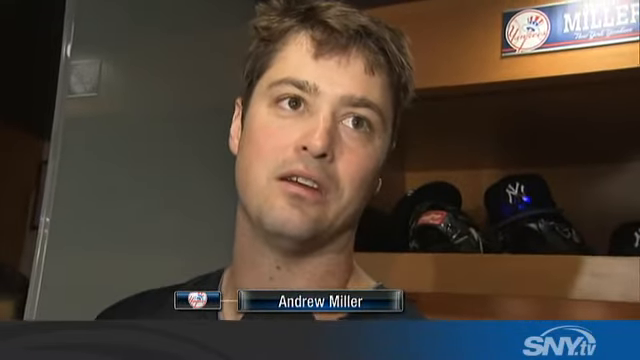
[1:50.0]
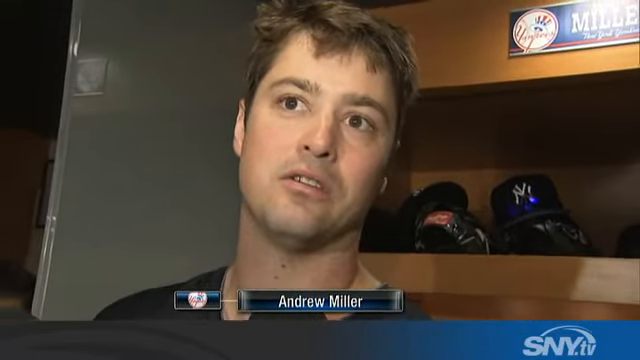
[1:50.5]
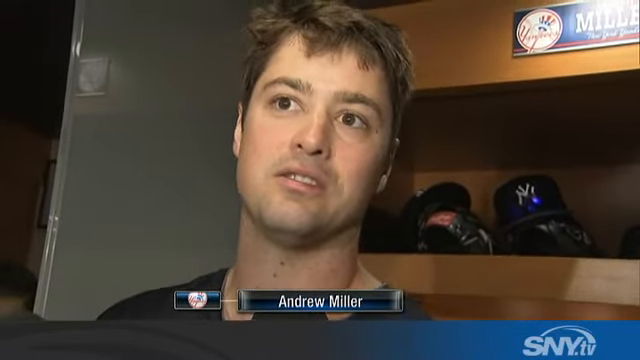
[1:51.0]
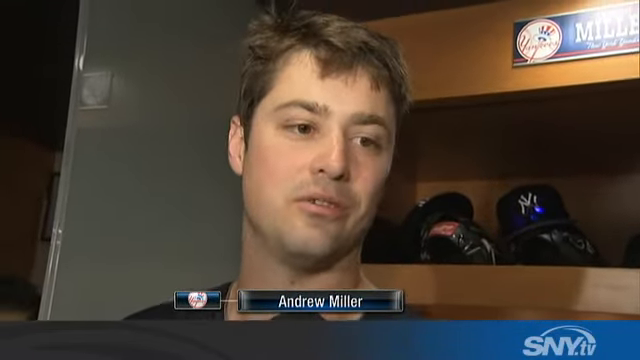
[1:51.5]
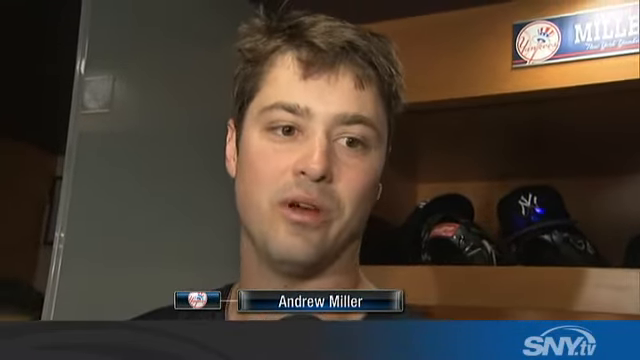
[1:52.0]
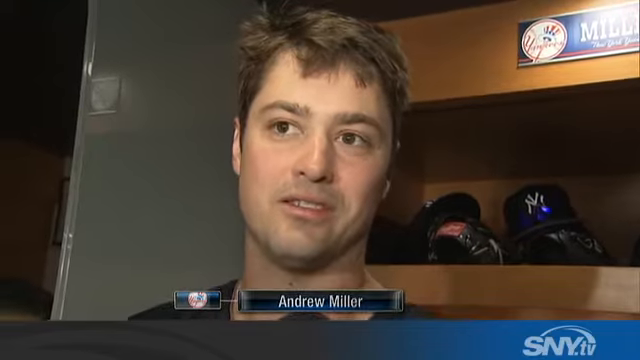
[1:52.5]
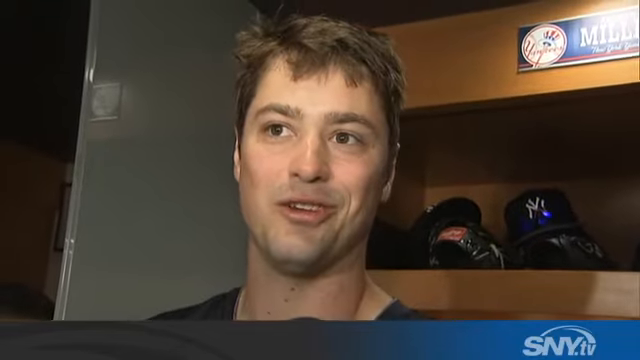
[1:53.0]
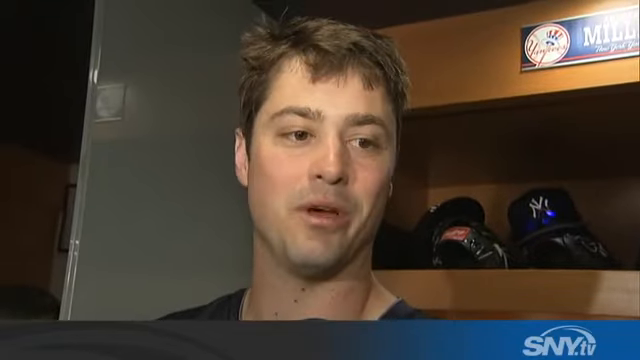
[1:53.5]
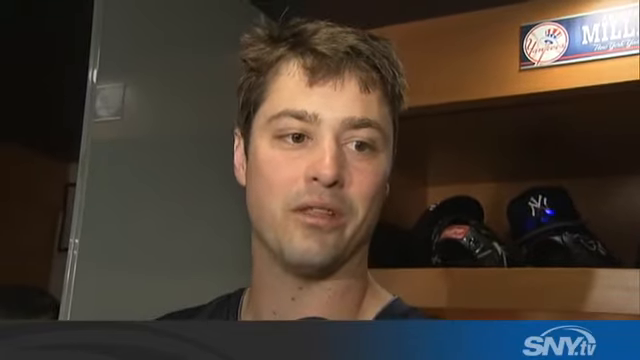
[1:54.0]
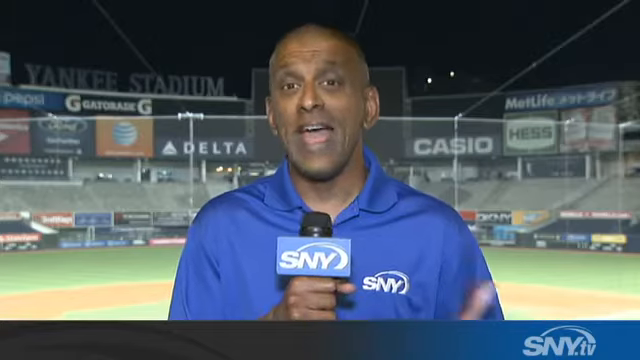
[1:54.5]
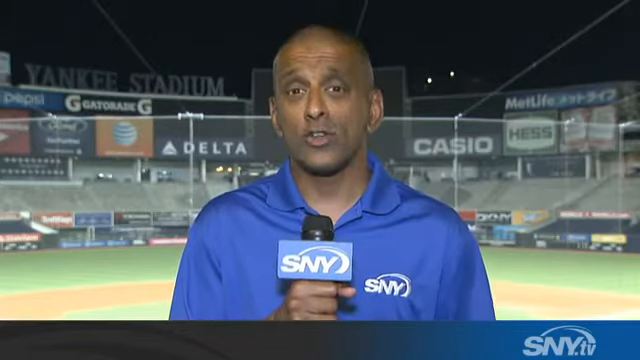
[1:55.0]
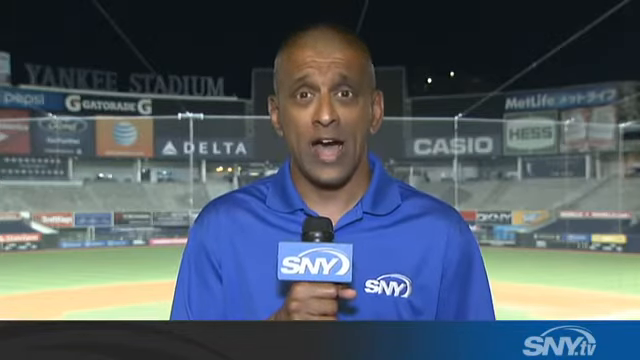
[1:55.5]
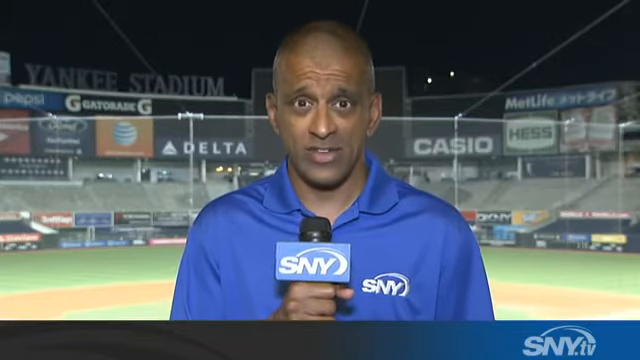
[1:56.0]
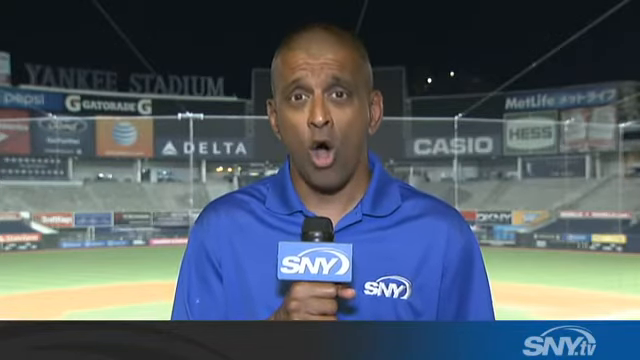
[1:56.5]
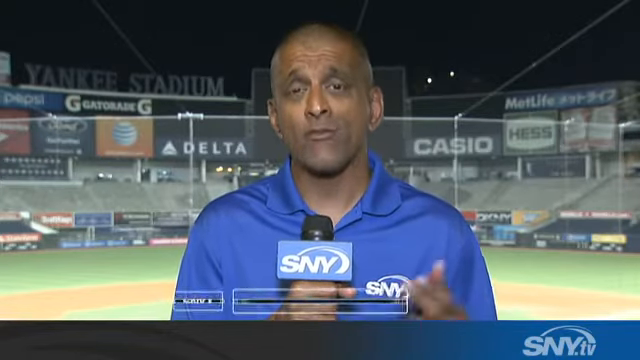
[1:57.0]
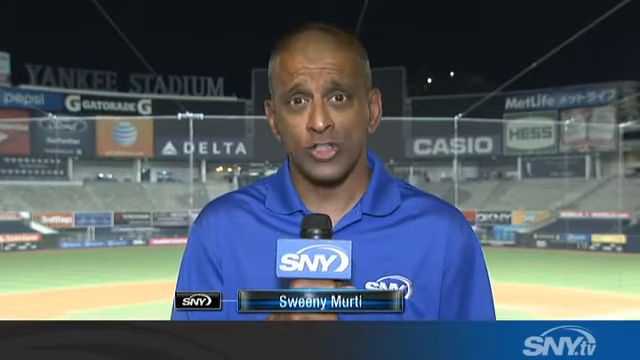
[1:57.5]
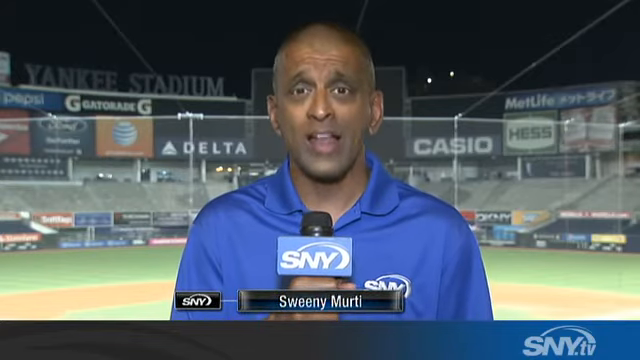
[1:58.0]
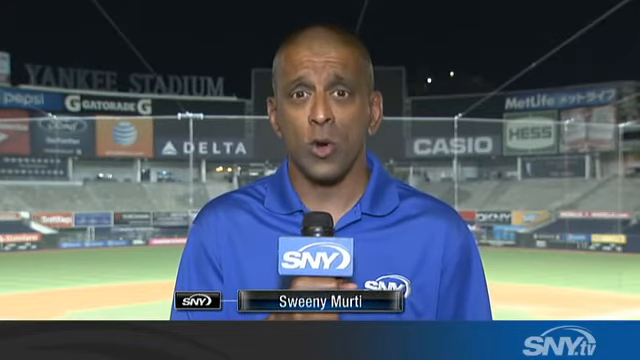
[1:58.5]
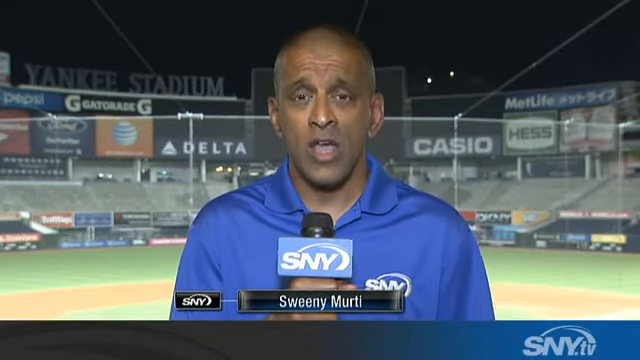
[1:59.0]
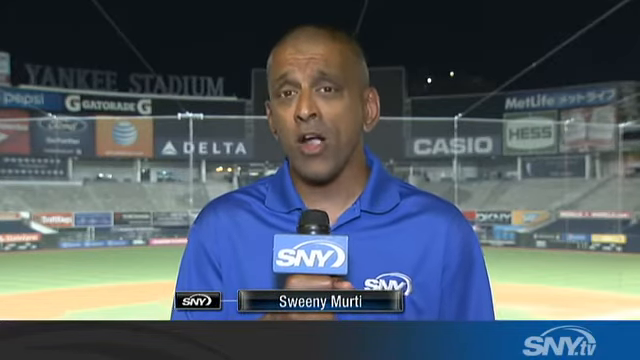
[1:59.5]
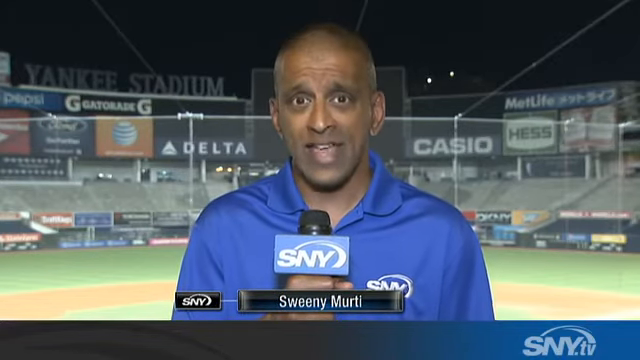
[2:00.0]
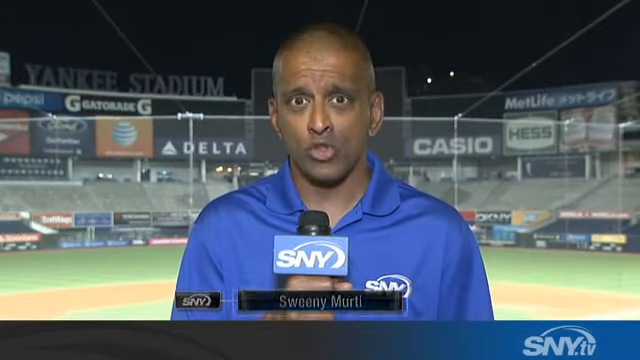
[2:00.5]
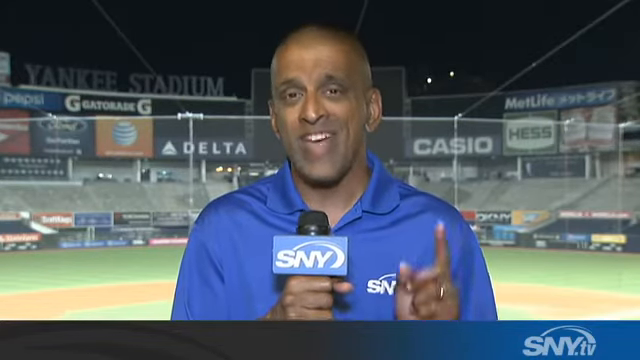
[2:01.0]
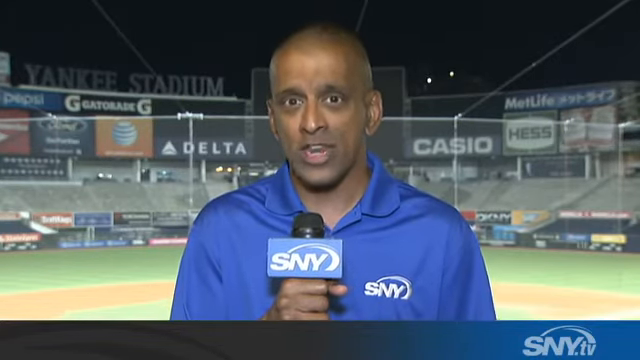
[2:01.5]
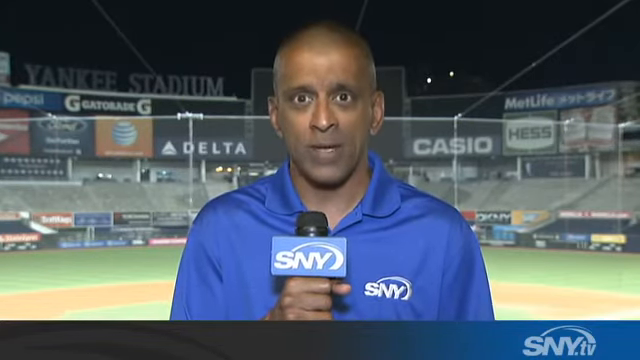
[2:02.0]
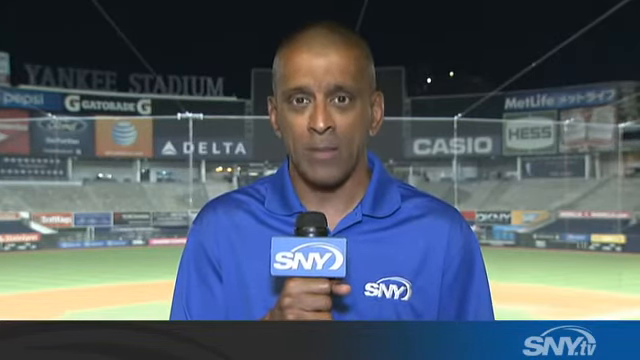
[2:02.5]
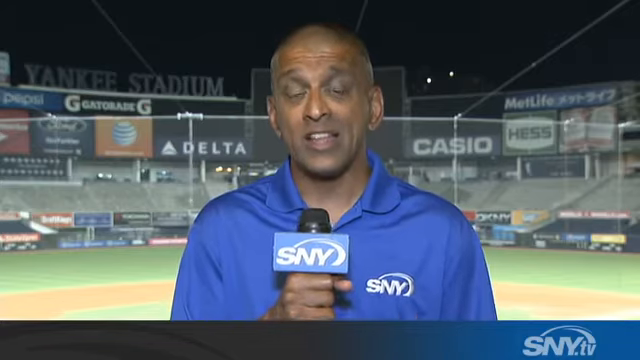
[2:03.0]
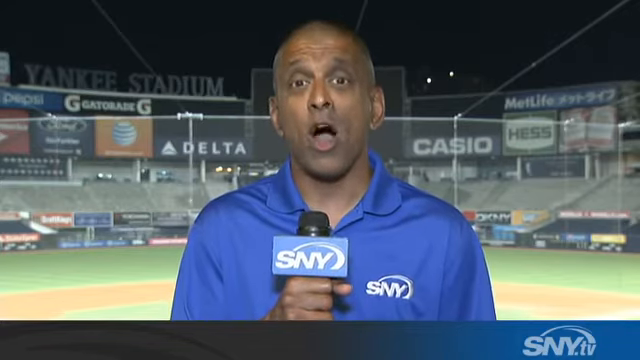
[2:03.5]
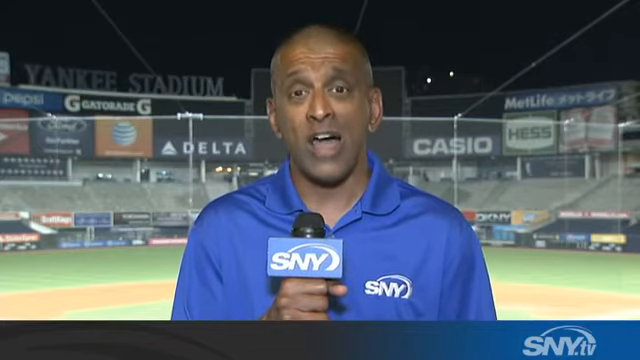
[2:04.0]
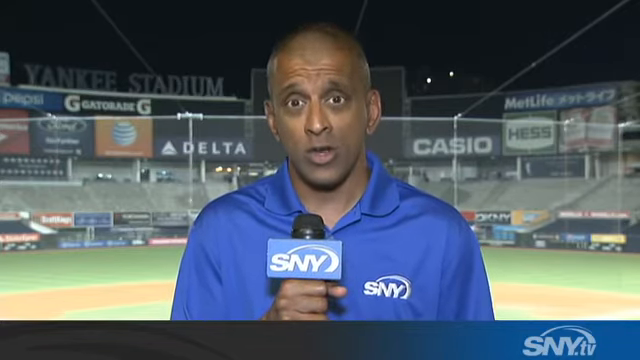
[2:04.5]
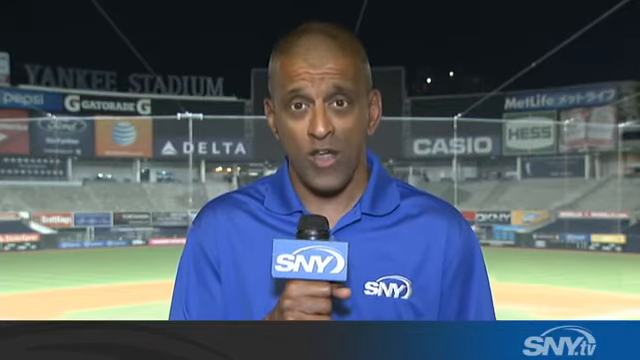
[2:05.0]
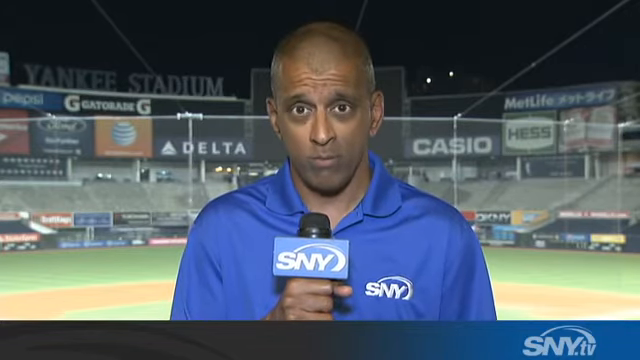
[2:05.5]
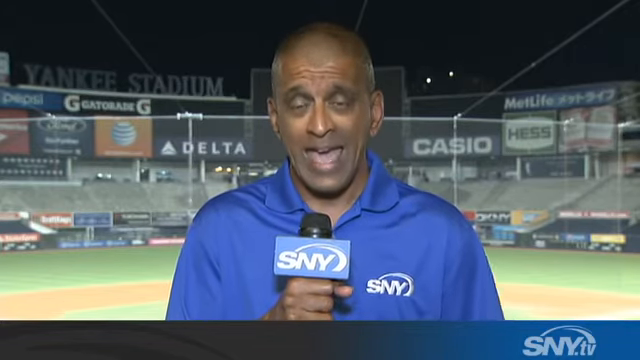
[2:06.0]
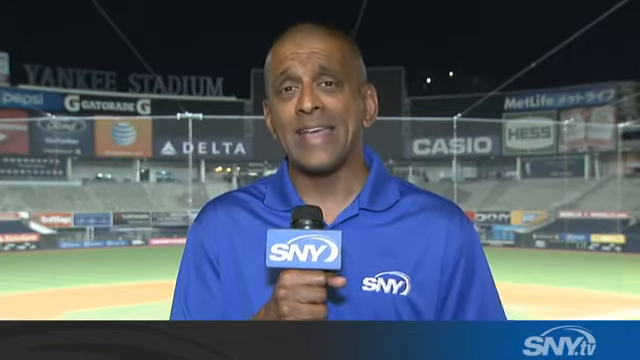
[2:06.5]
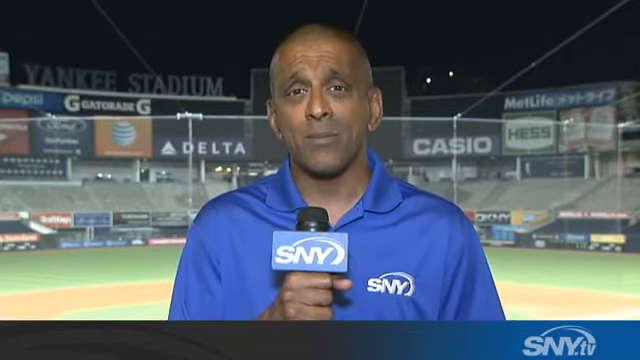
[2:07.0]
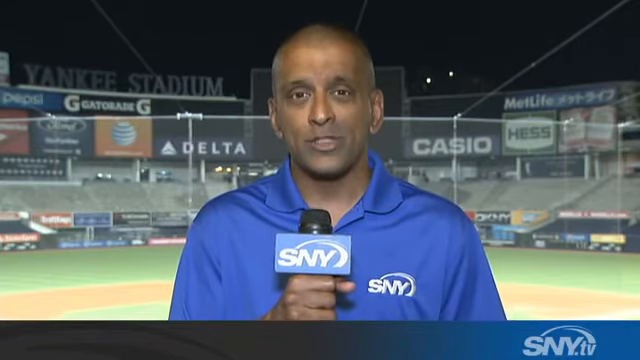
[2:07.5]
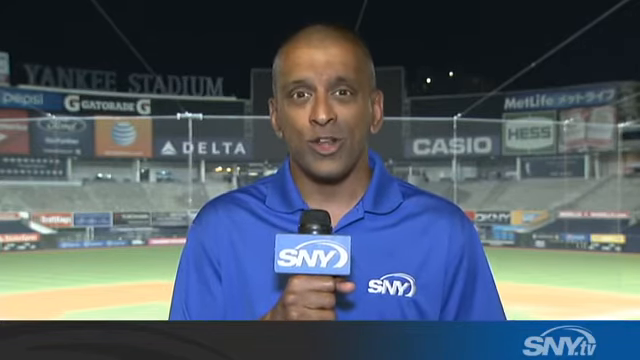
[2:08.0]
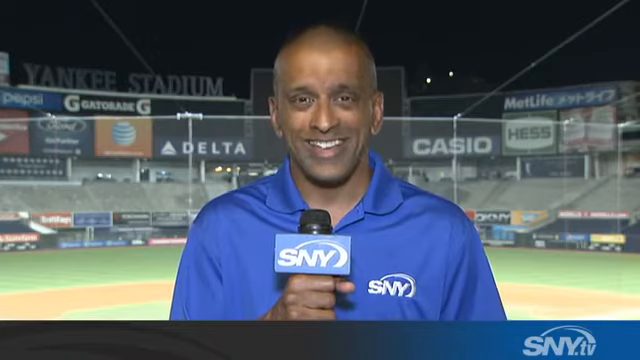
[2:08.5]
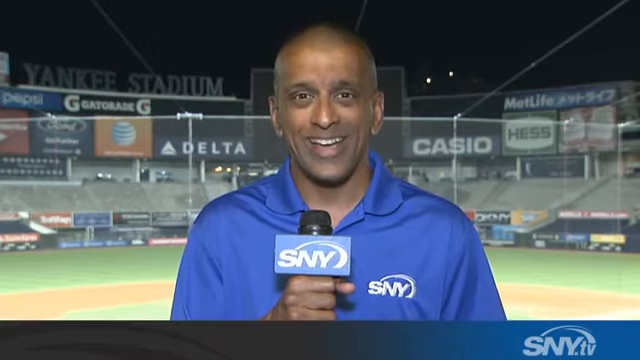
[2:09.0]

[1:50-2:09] Andrew Miller is shown, with his locker area on the right side of the screen behind him, marked by a banner reading "Miller" on his work area. He talks, leaning and turning his head toward the right side of the screen. Then what appears to be an SNY reporter appears, holding a mostly blue microphone with "SNY" in white; his shirt also reads "SNY" in white. He holds the microphone in his right hand and stands in an empty baseball stadium. His name is Sweeney.